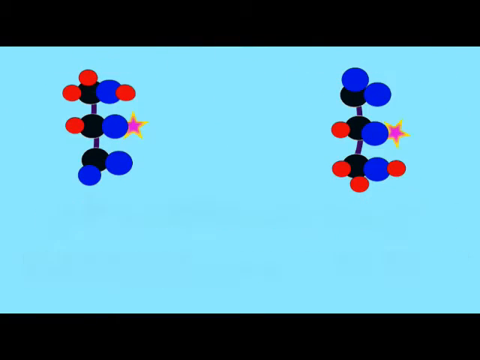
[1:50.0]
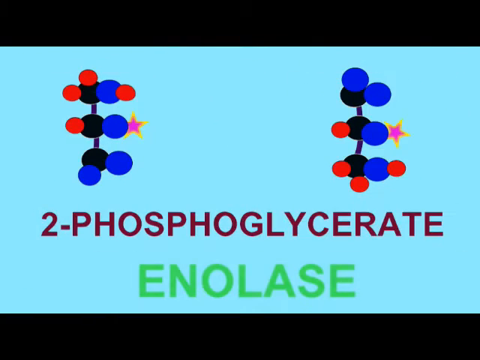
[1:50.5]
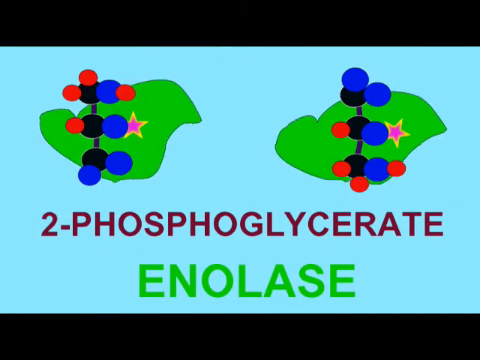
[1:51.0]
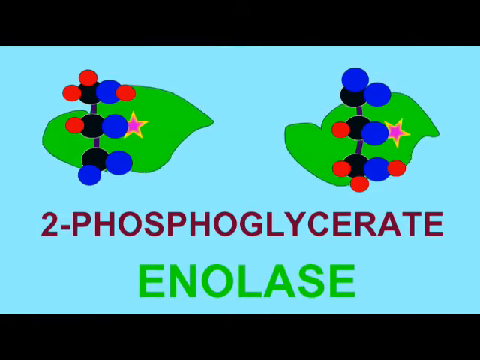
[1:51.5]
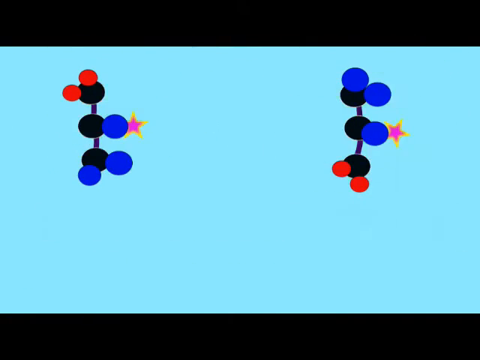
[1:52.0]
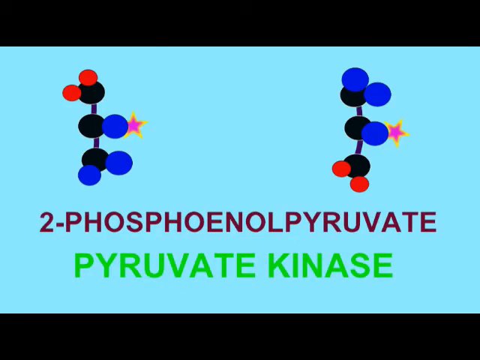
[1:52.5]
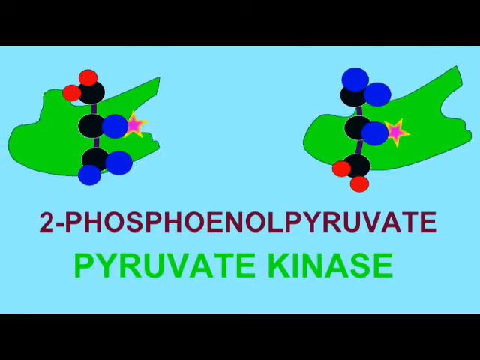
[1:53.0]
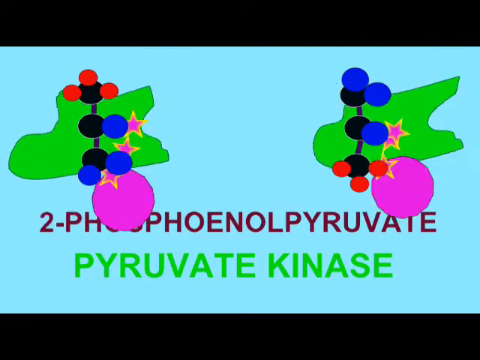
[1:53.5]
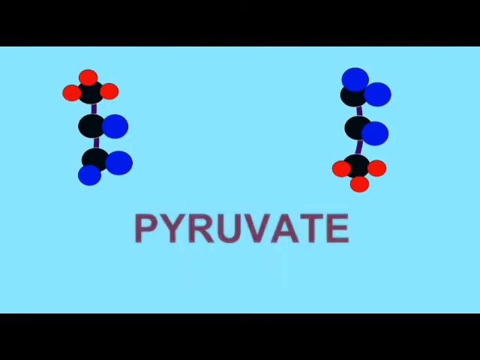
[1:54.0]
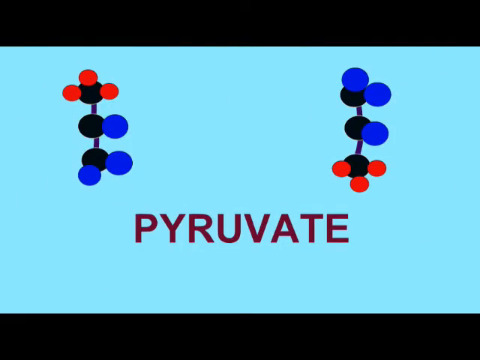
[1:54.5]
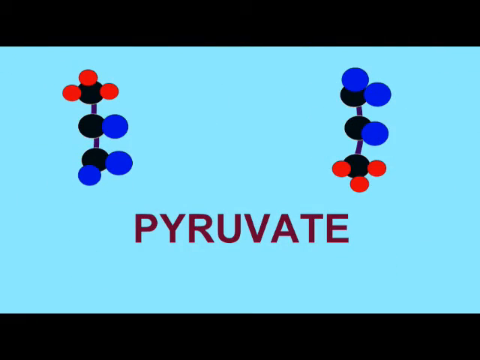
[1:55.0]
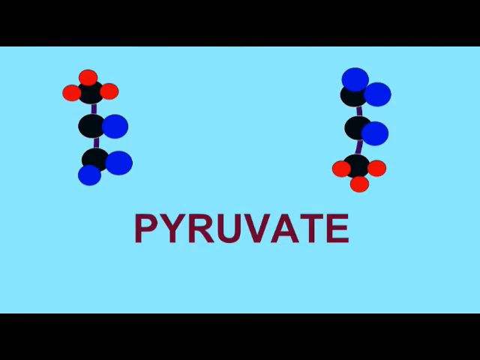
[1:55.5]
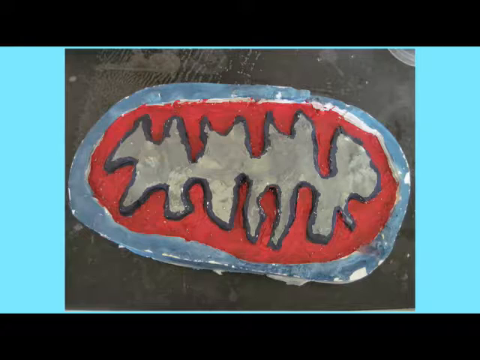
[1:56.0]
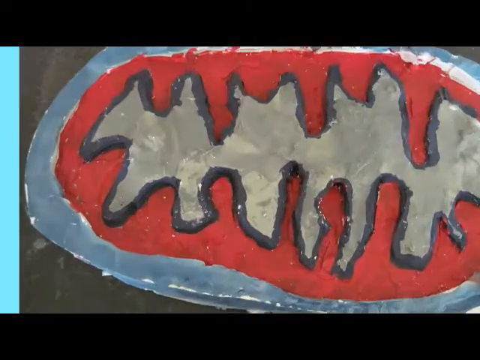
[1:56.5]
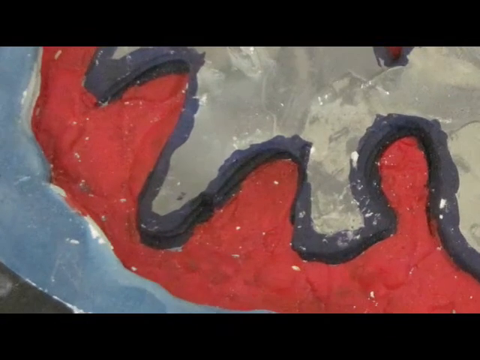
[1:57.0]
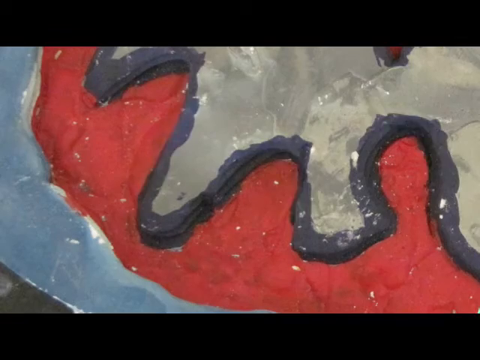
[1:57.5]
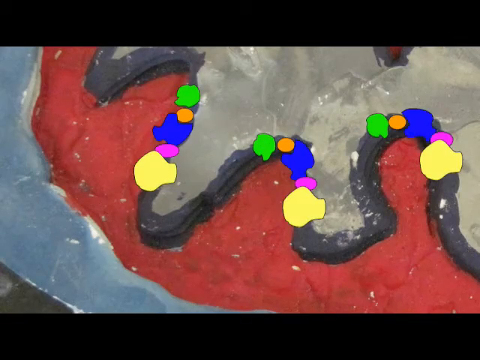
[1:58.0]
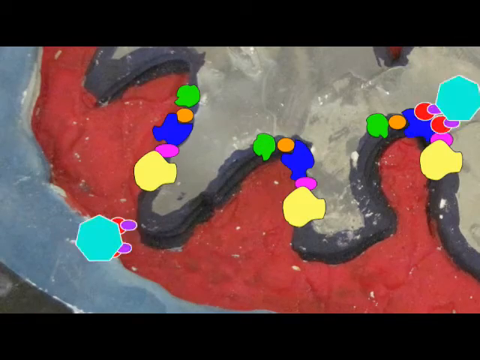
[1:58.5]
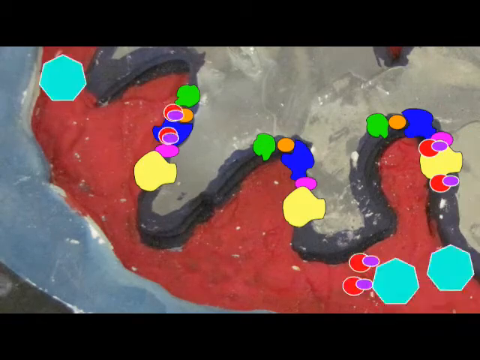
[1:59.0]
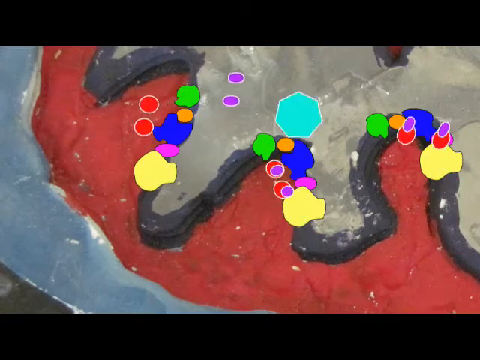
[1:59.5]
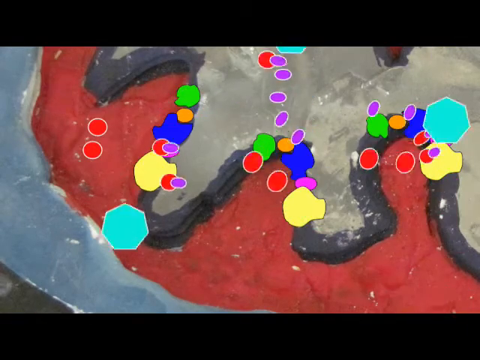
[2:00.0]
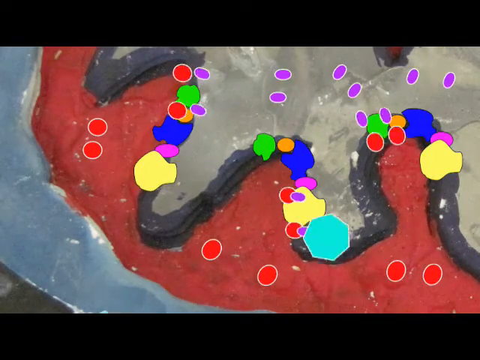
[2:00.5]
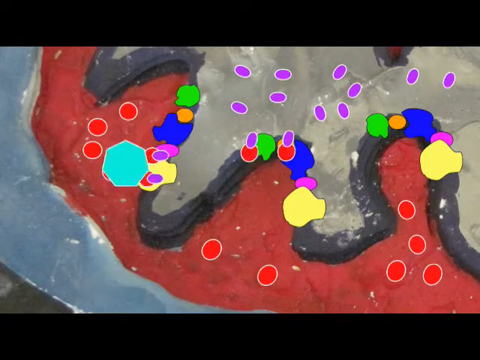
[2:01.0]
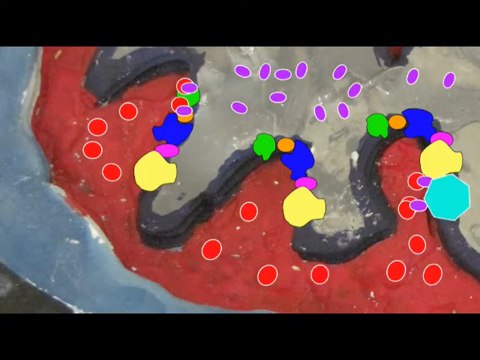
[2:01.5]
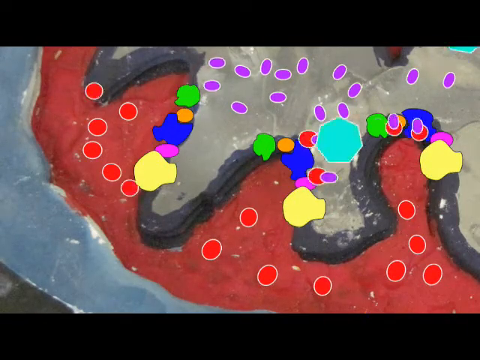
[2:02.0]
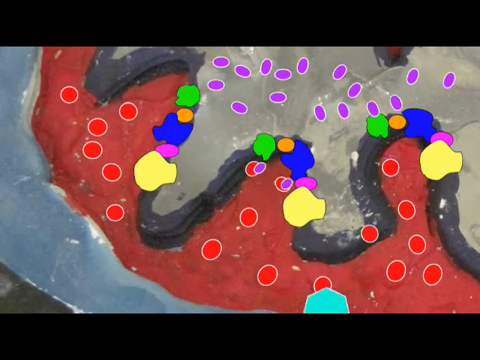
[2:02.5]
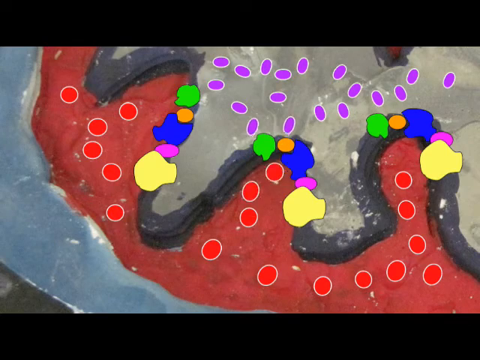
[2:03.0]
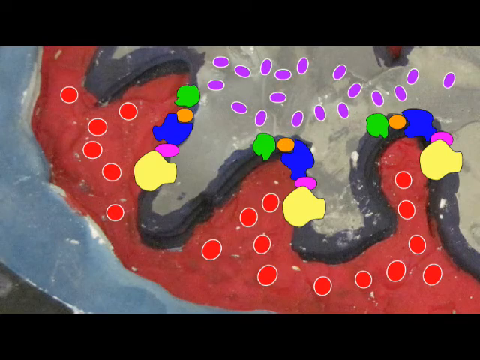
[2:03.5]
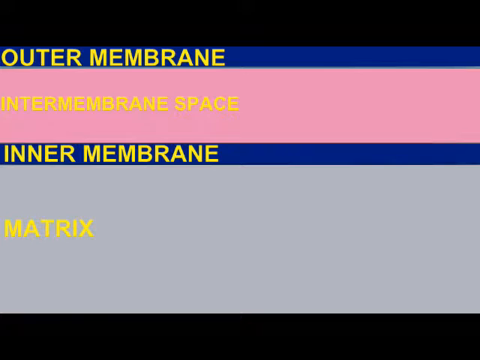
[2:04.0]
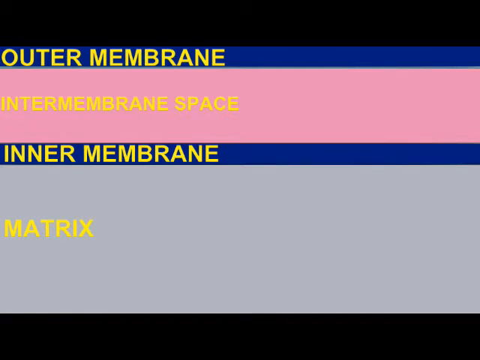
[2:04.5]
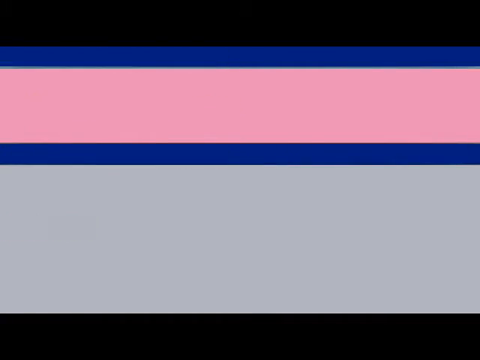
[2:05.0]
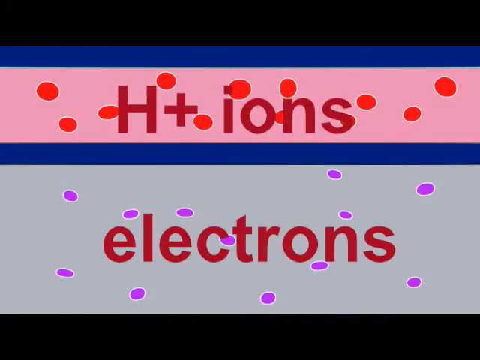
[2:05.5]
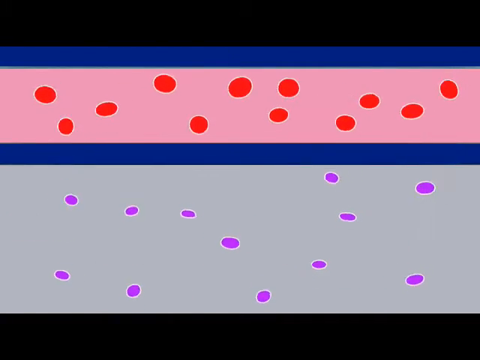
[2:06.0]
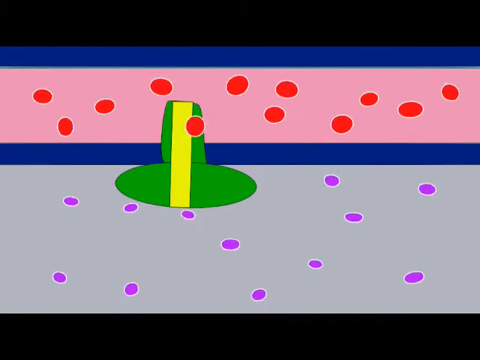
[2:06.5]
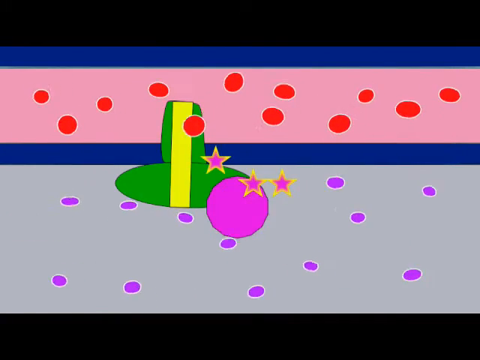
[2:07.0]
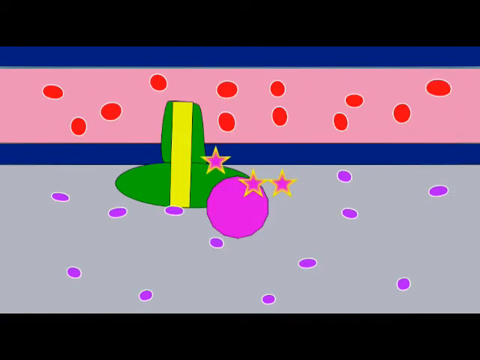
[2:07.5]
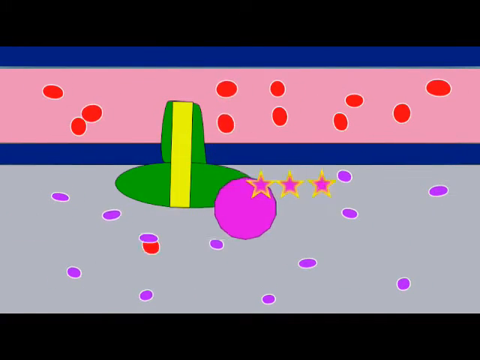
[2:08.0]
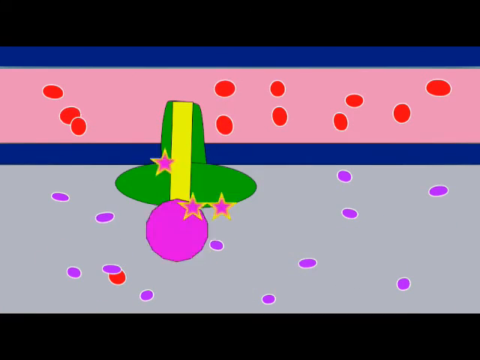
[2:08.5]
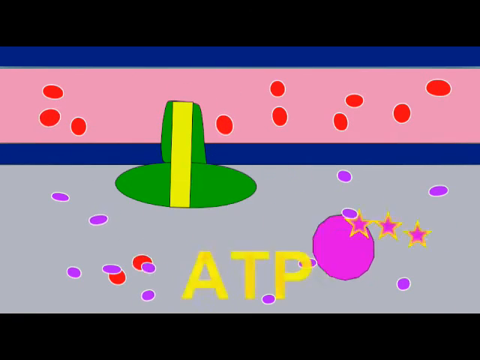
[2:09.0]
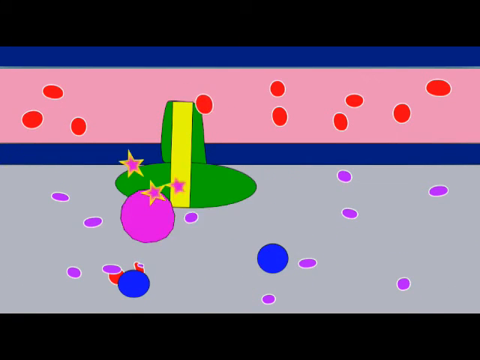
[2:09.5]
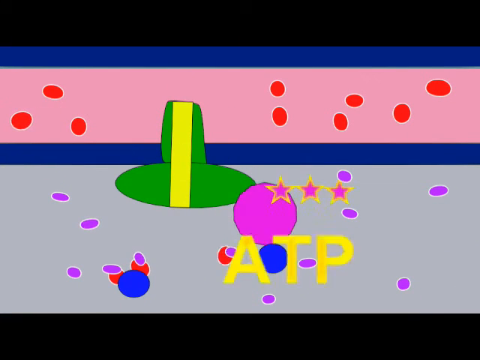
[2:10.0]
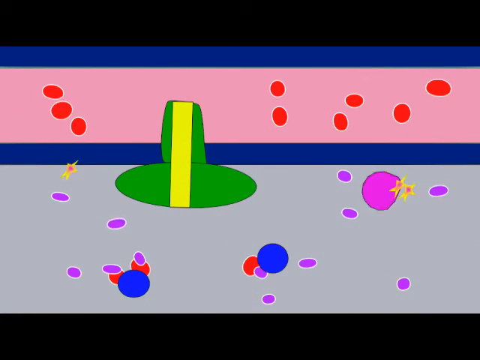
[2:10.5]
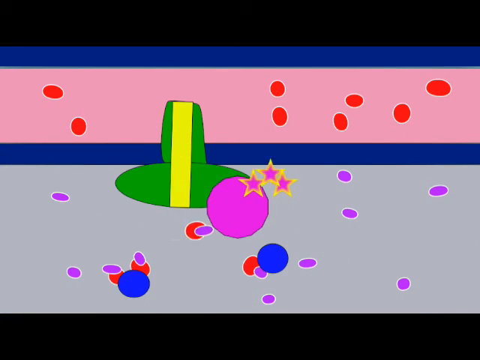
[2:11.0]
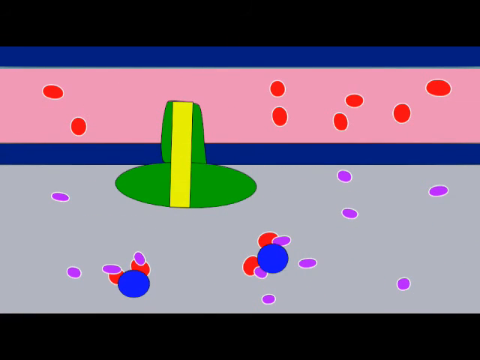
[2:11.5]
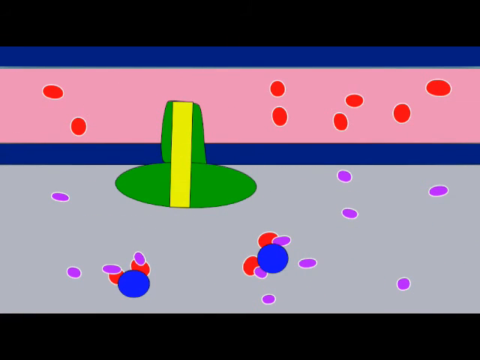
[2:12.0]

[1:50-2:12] On the left and right sides are chains of a black circle, a little chord, a black circle, a chord and a black circle. On the left one are two red ones at the top, three blue ones down the side, a red one on top of the top blue one, a pink star second one down, and a blue one on the bottom. The other one has the same sort of diagram, flipped upside down. More energy information comes across the bottom, and two green globs come down and go off the top of the page as more information continues to scroll. The view zooms in on a different part showing different kinds of bacteria coming in: purple, red, green and orange. The red and purple ones are circular, and the rest are misshapen. The video then cuts to a background with a blue band across the top labeled "outer membrane" in yellow, a thicker pink band below labeled "intermembrane space", then a dark blue band labeled "intermembrane" in yellow, and a light blue bottom half labeled "matrix" in yellow. The view flips: there are red circles in the pink and purple circles in the bottom, kind of moving and dancing around. More text appears, showing how these things combat different types of diseases.